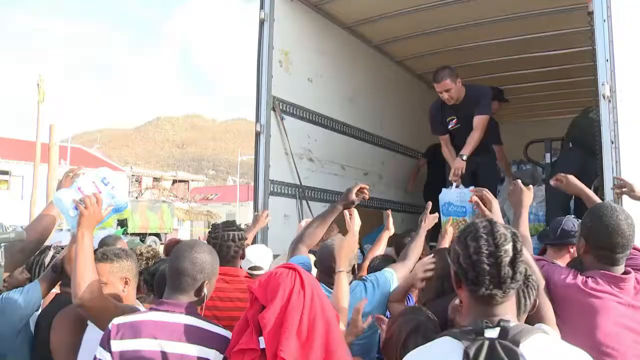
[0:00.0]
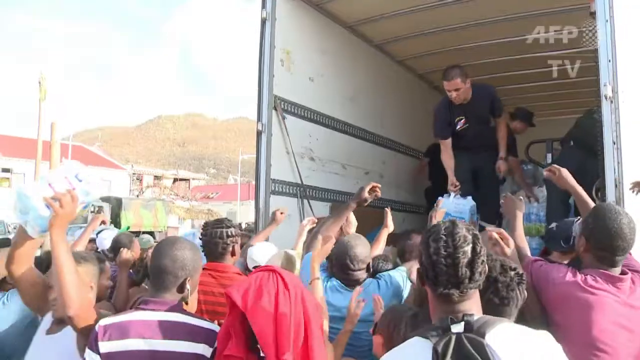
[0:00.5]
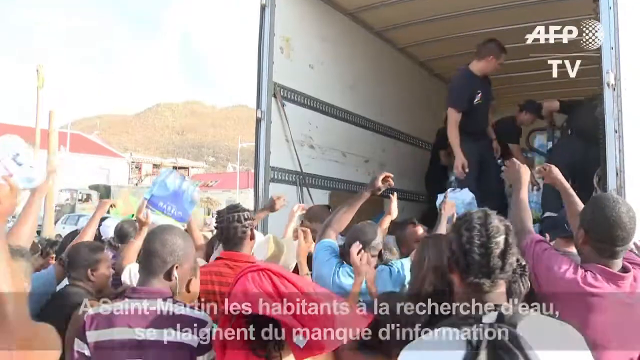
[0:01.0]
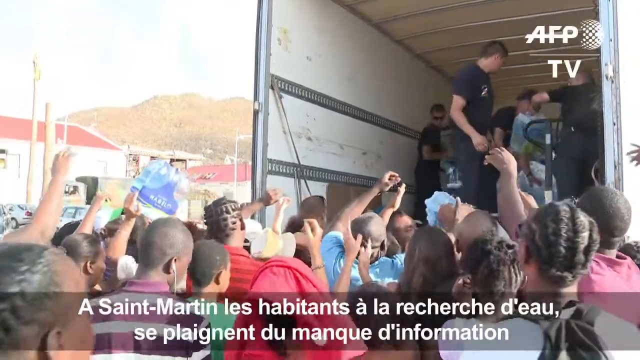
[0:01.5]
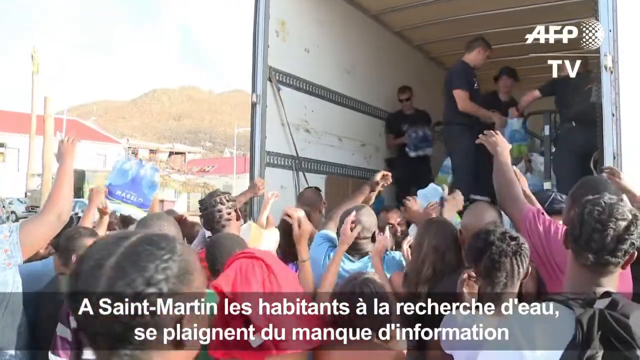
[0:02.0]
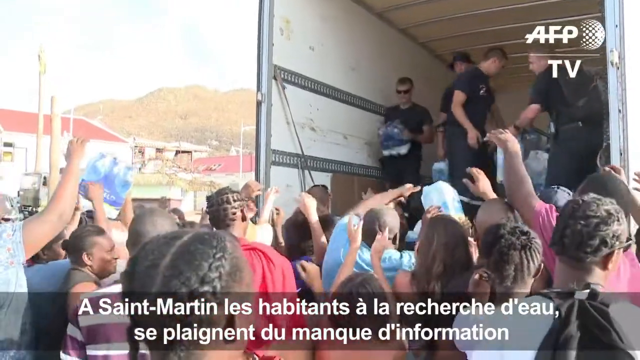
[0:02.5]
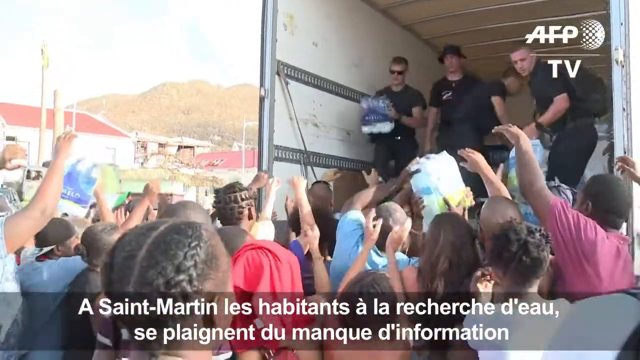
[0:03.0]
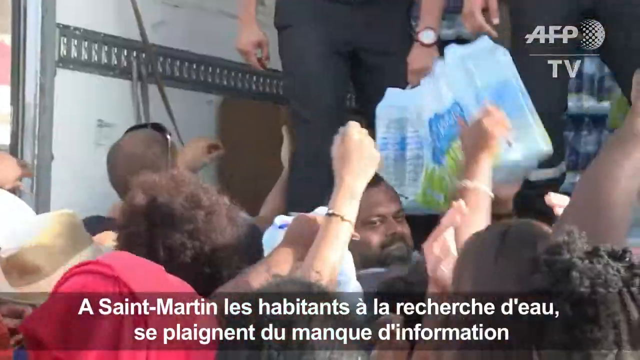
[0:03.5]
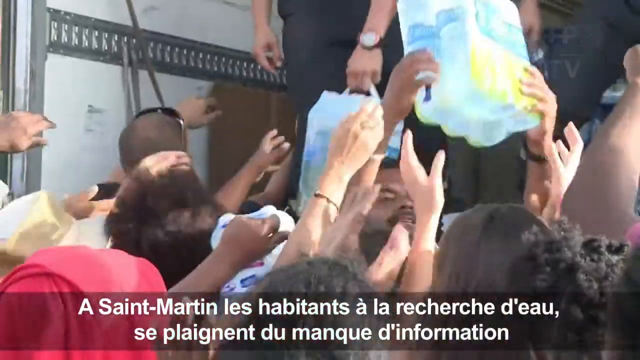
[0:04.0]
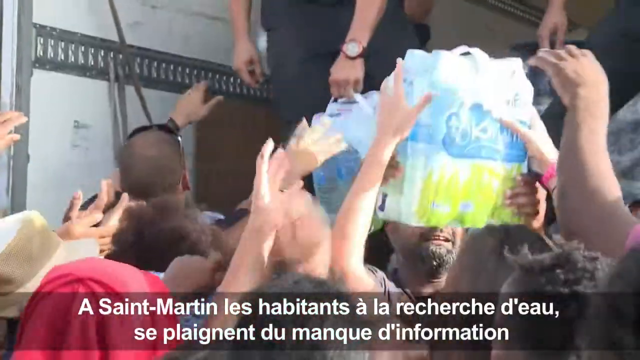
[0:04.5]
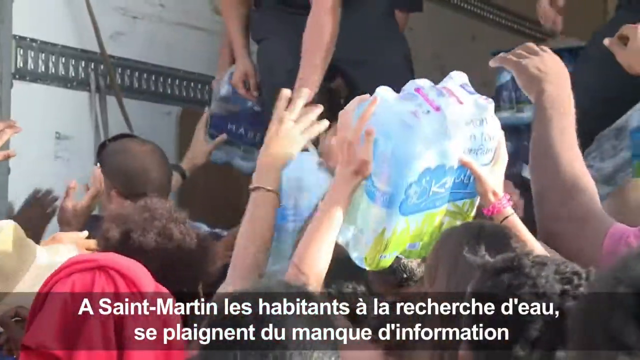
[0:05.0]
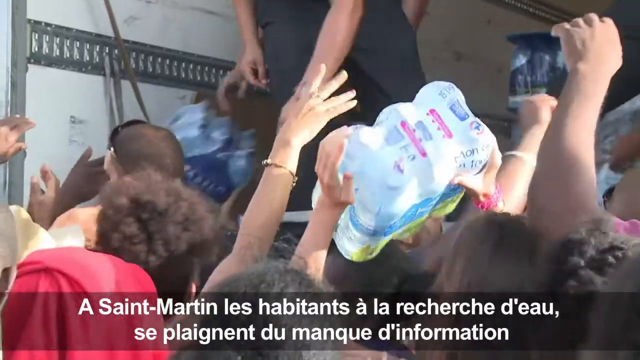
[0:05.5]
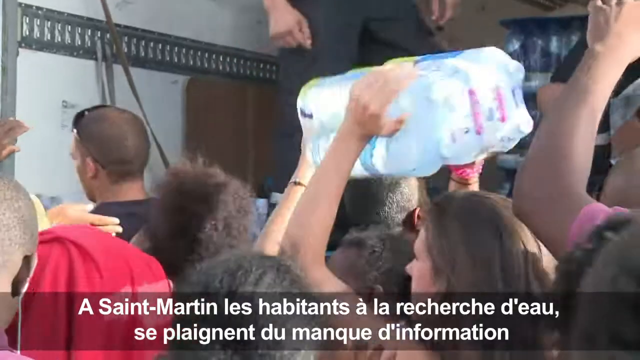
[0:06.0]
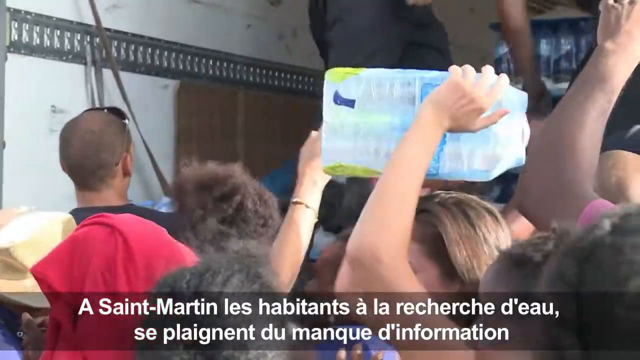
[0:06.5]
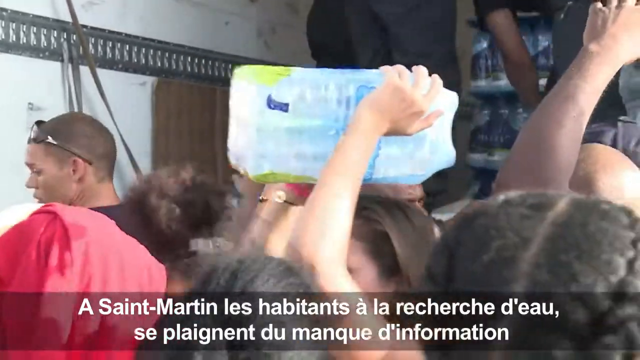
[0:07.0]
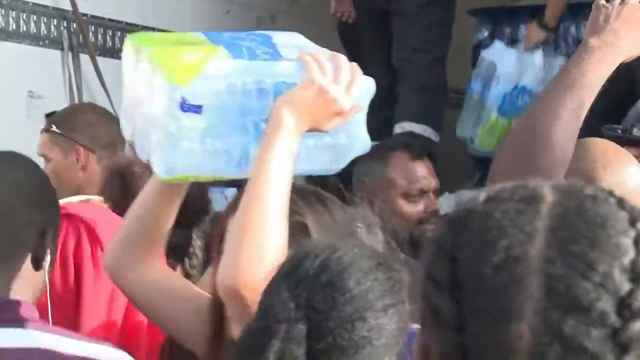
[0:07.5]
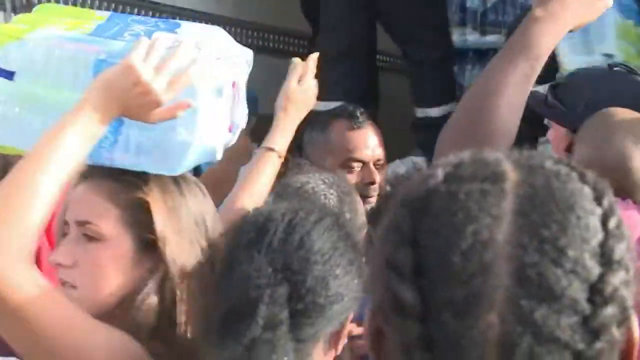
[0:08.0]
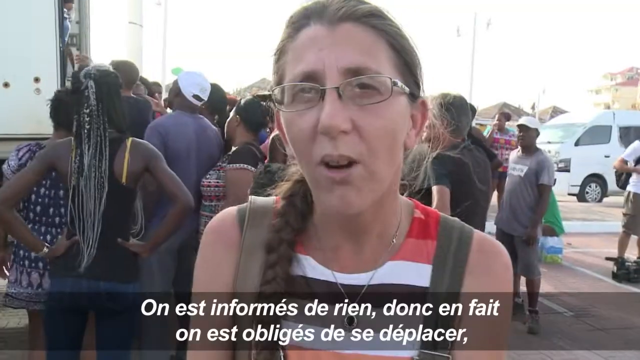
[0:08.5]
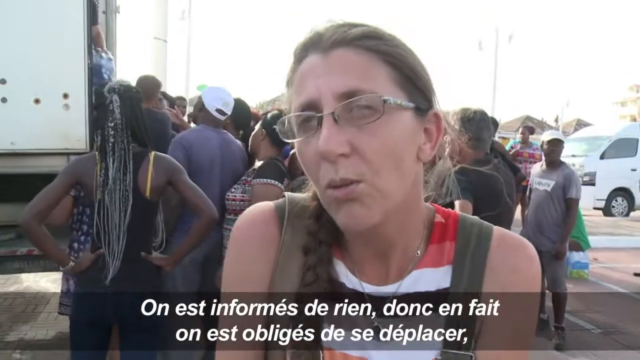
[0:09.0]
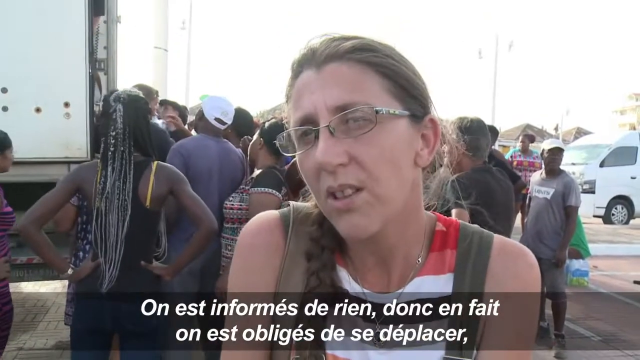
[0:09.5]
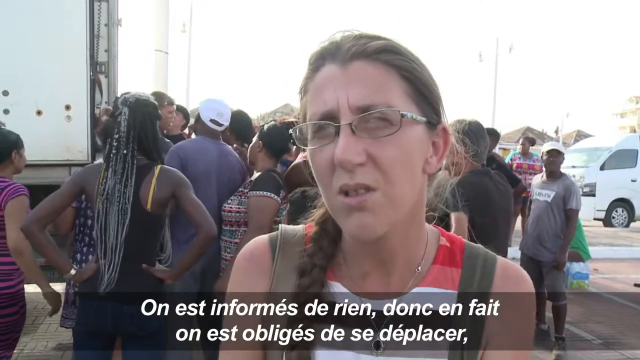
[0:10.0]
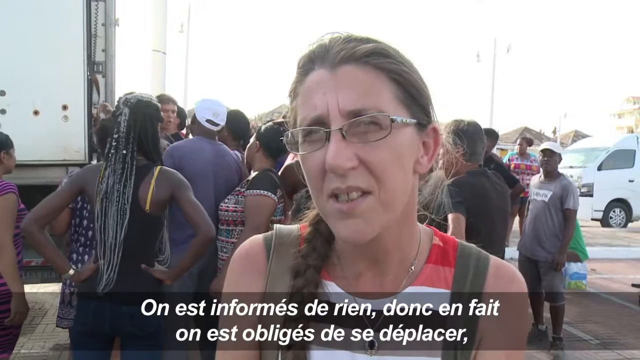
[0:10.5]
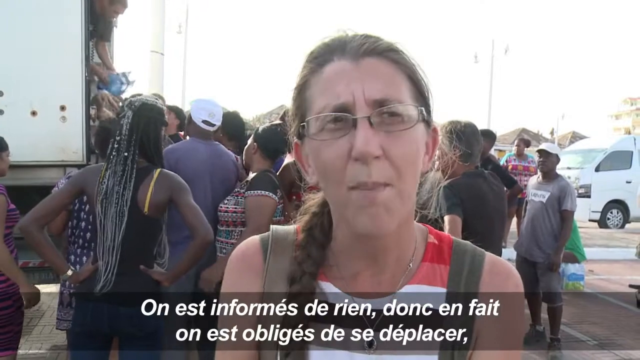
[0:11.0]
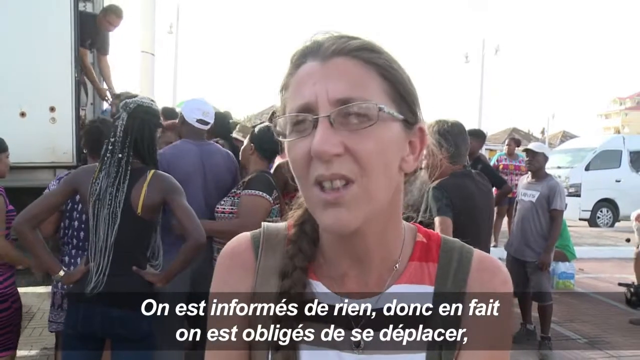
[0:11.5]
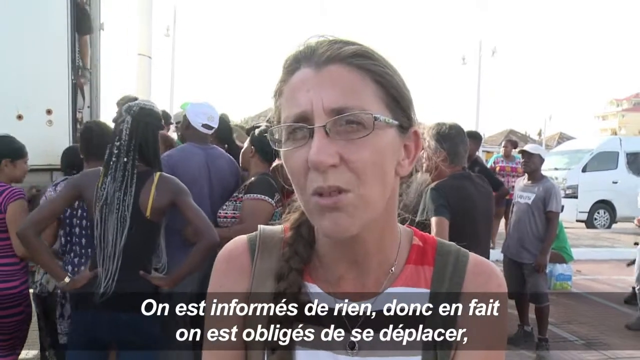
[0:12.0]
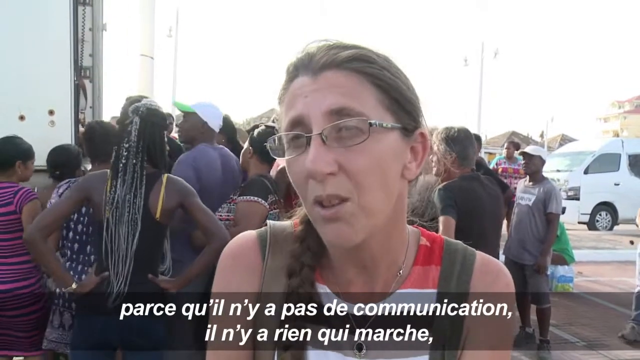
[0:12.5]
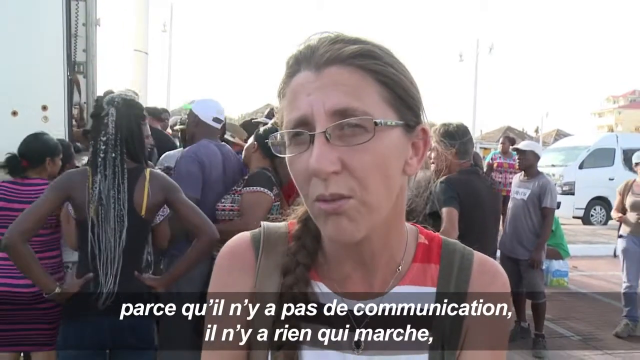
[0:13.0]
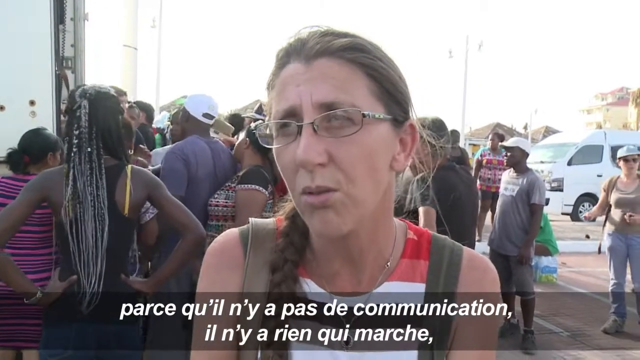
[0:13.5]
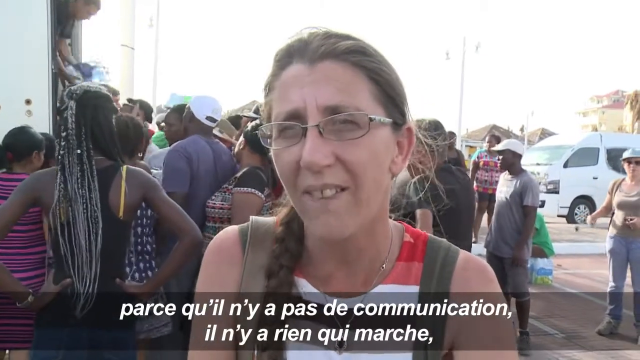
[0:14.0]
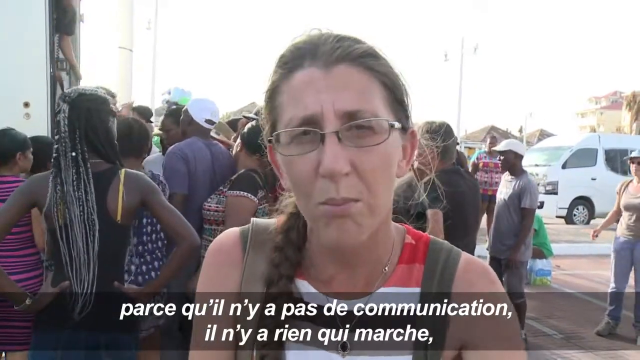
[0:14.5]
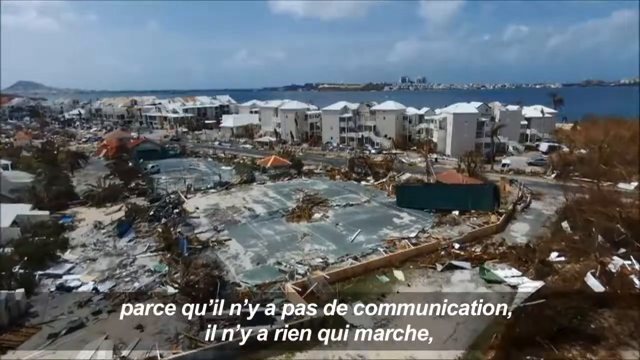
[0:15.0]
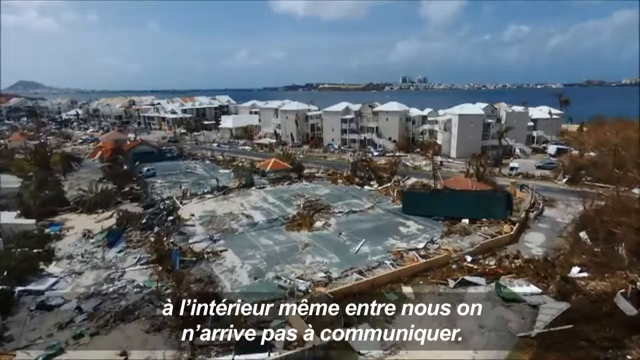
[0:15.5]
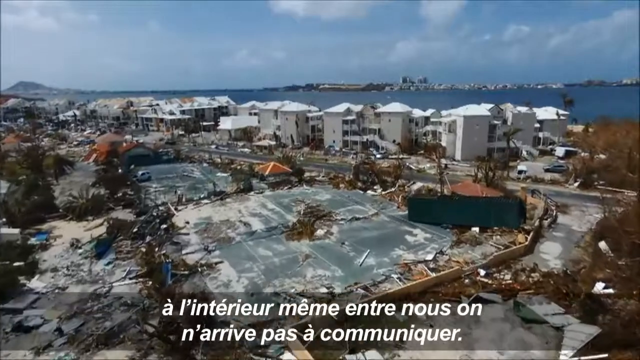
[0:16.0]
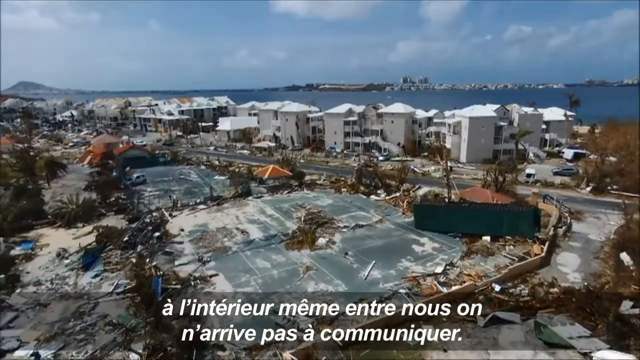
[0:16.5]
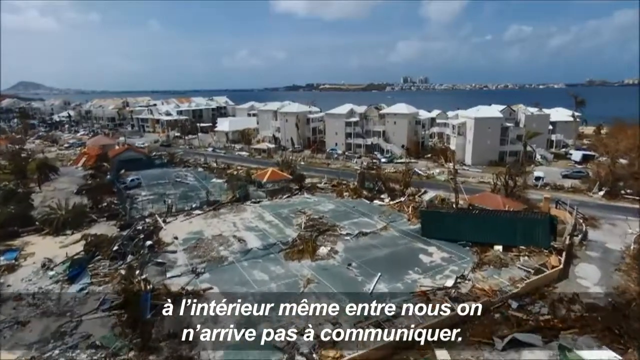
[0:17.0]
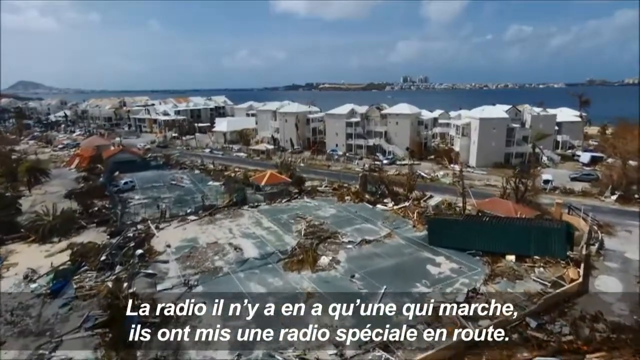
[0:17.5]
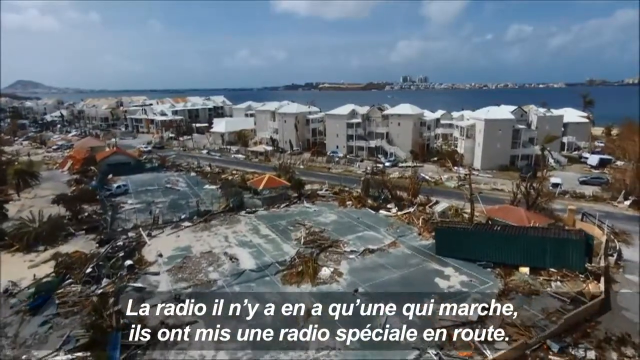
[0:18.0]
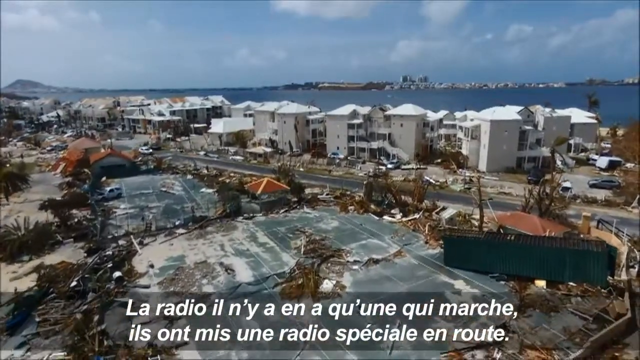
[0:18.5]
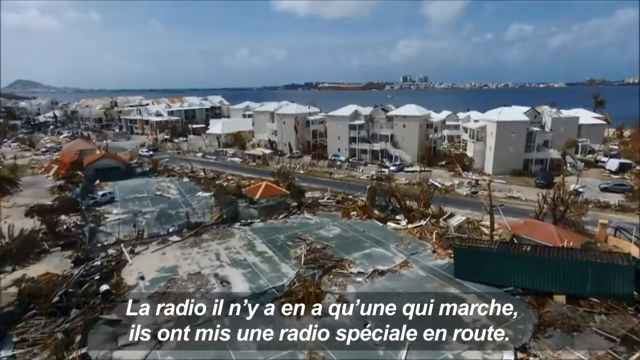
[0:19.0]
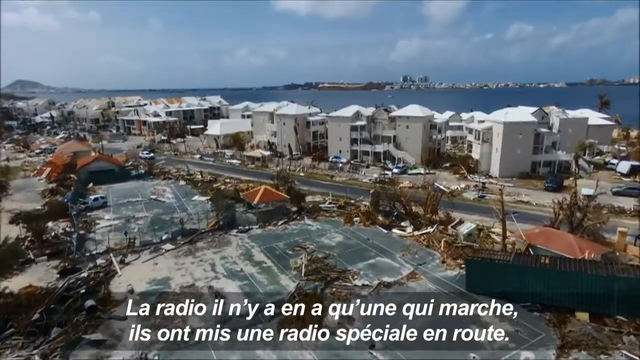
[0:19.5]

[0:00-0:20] A large truck stands with its back door open. Toward the right, a man inside the truck, wearing a black t-shirt and black pants, carries a large container of large bottles of clean packaged water out of the truck with both hands. Many people in various colored shirts are gathered around, and most of them have dark skin. Four workers, dressed alike, bring packages of clean bottled water to give out to the public. A very mountainous region is visible in the background, and the skies appear clear. Subtitles in a non-English language, possibly French, appear on screen. A woman with long, dark, braided hair, wearing glasses and a tank top, is interviewed; she appears to be describing a desperate situation. The video then shows an ocean region where devastation is clear in part of the town. Some homes appear completely destroyed, while others appear badly damaged. Many of the homes are at least three stories tall.